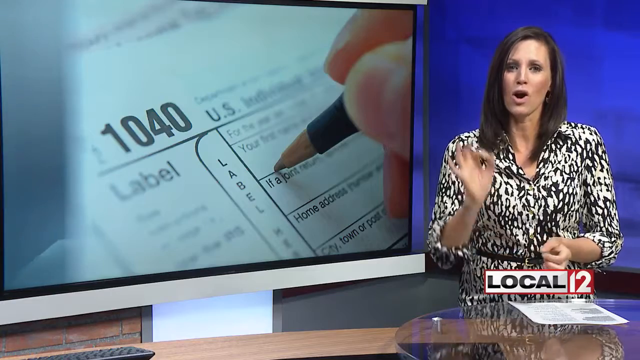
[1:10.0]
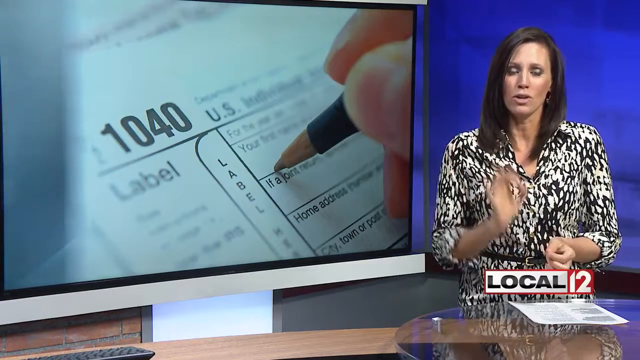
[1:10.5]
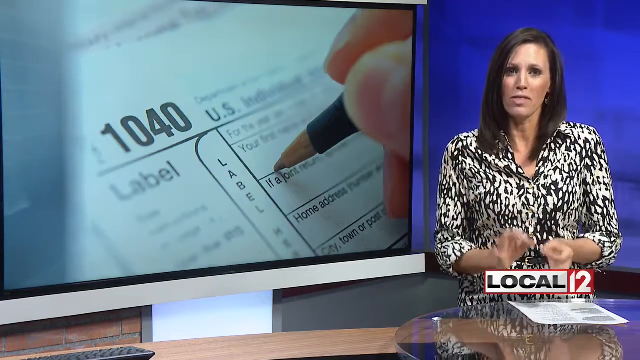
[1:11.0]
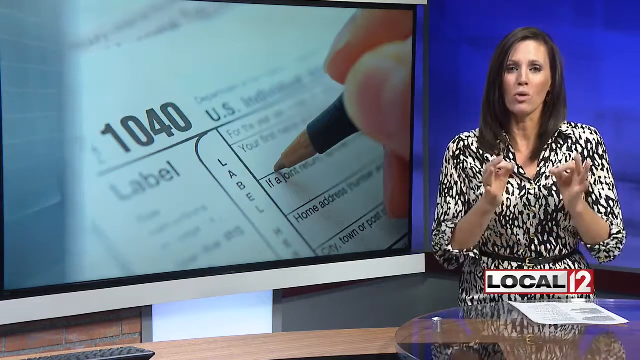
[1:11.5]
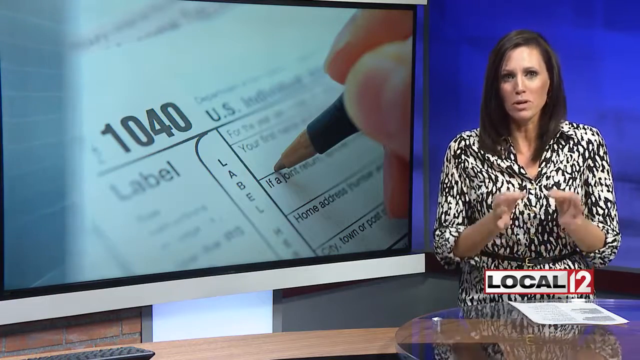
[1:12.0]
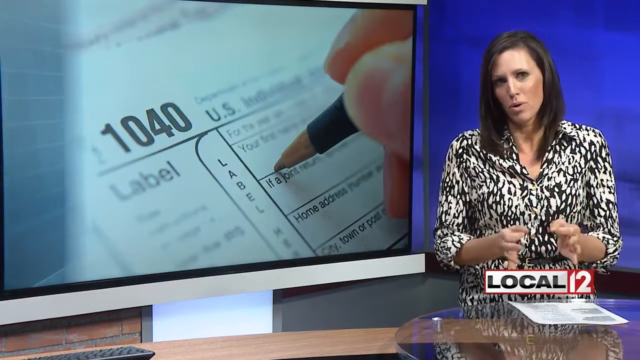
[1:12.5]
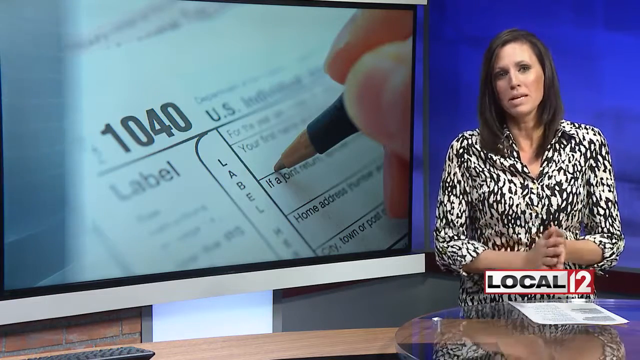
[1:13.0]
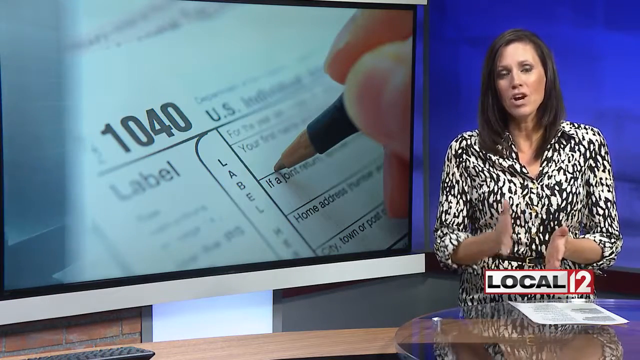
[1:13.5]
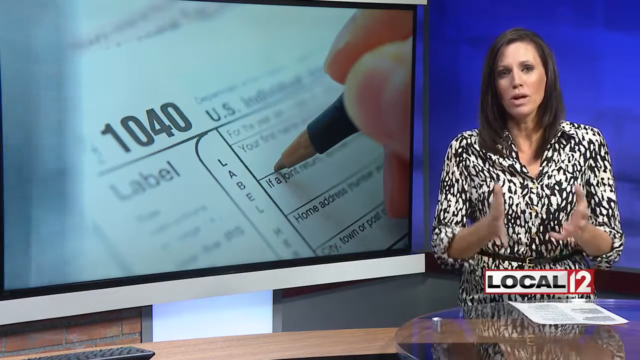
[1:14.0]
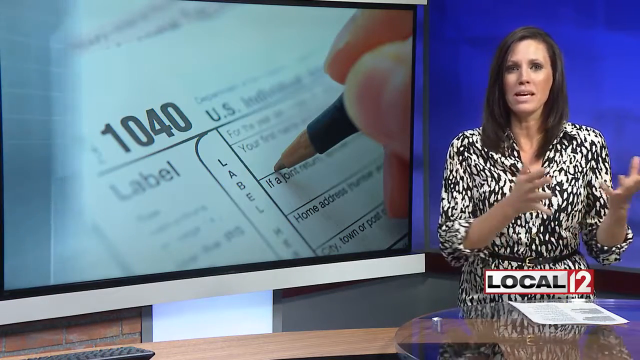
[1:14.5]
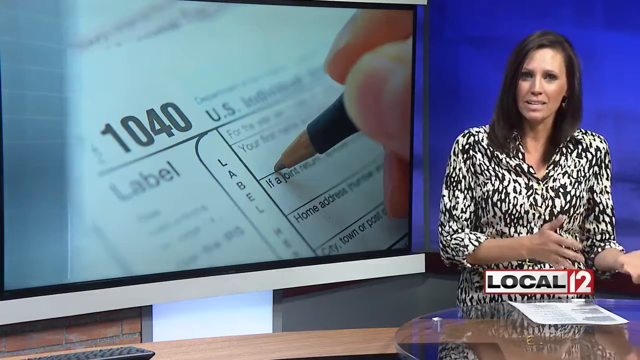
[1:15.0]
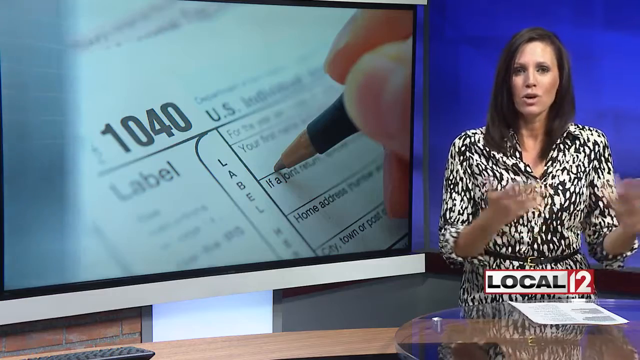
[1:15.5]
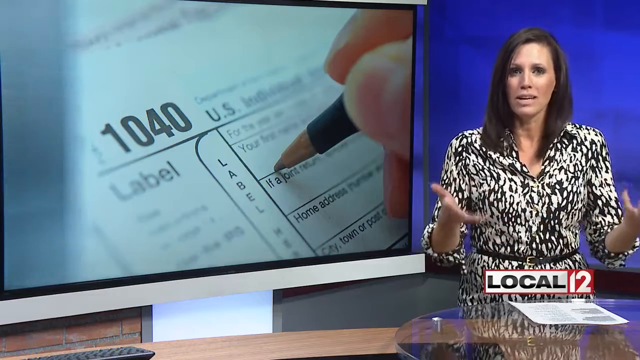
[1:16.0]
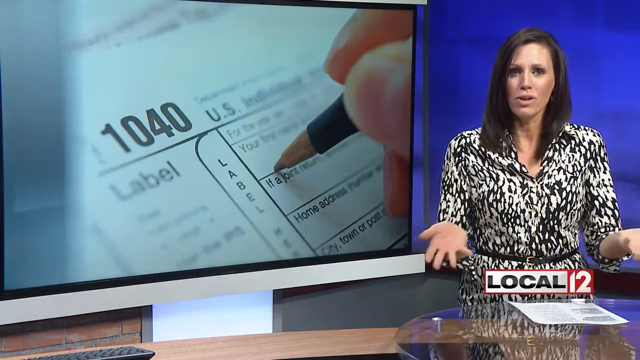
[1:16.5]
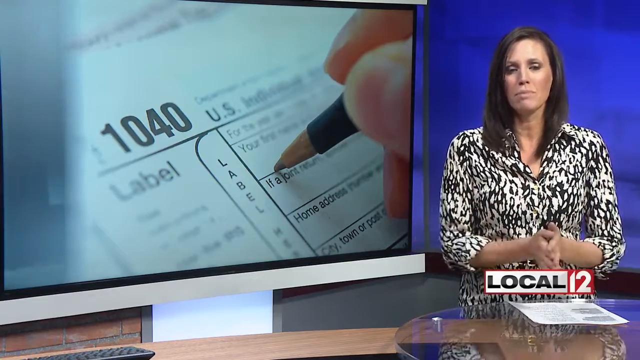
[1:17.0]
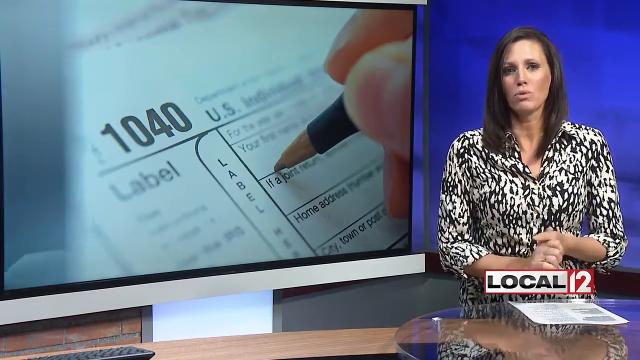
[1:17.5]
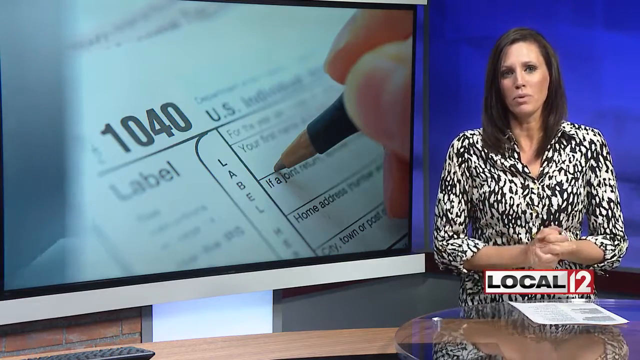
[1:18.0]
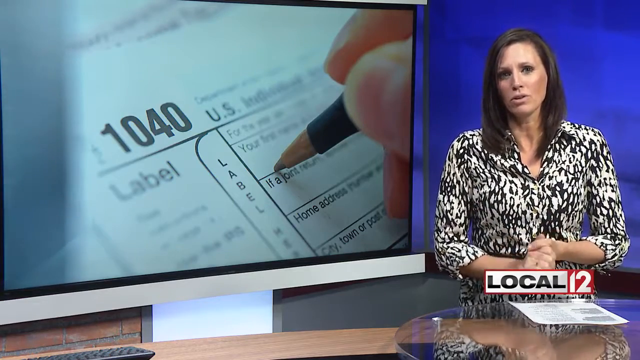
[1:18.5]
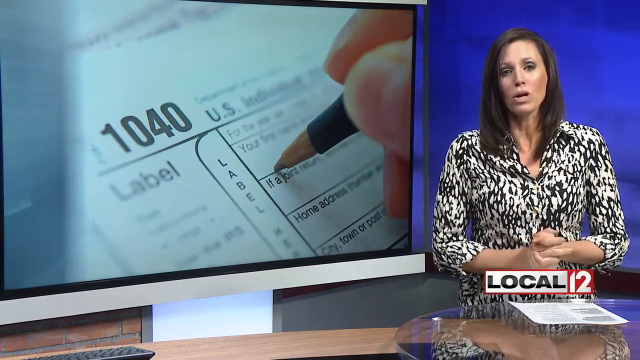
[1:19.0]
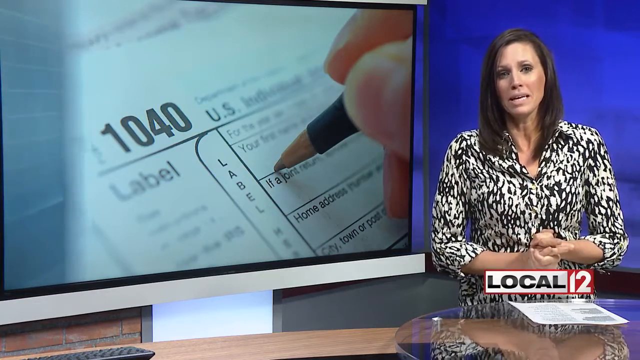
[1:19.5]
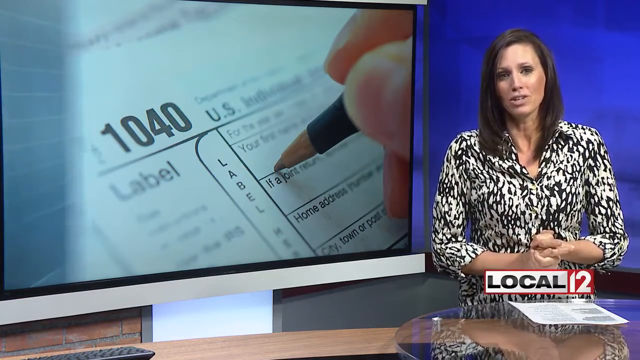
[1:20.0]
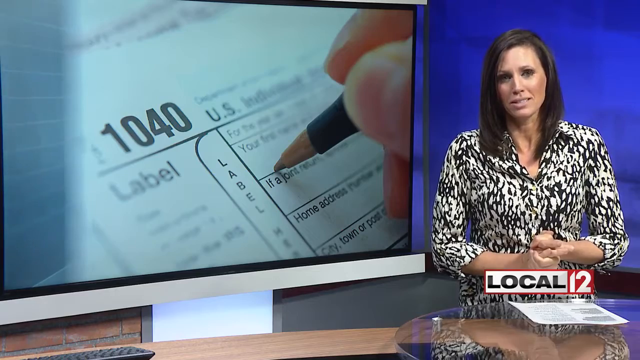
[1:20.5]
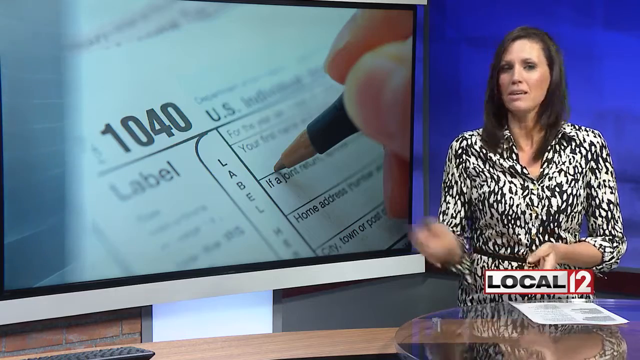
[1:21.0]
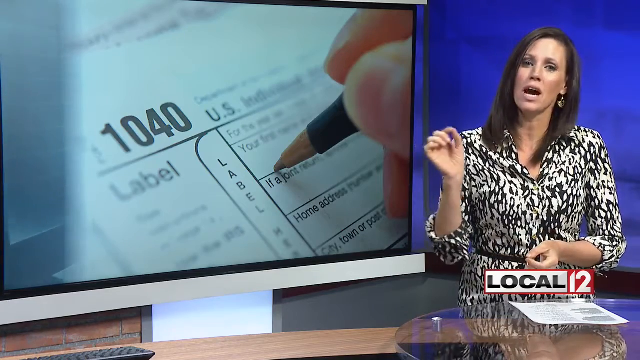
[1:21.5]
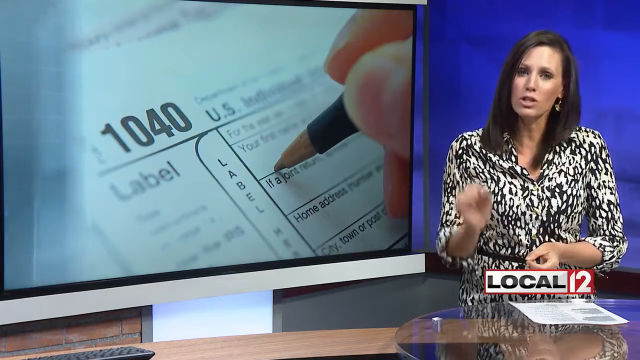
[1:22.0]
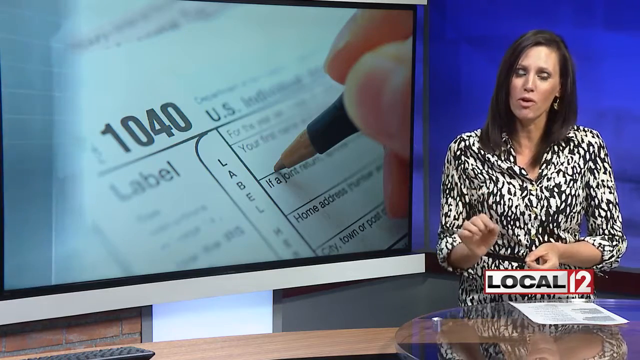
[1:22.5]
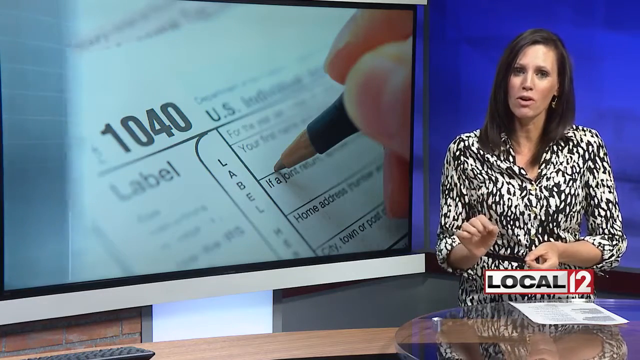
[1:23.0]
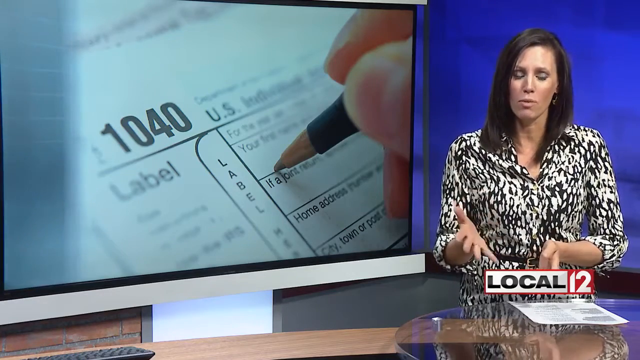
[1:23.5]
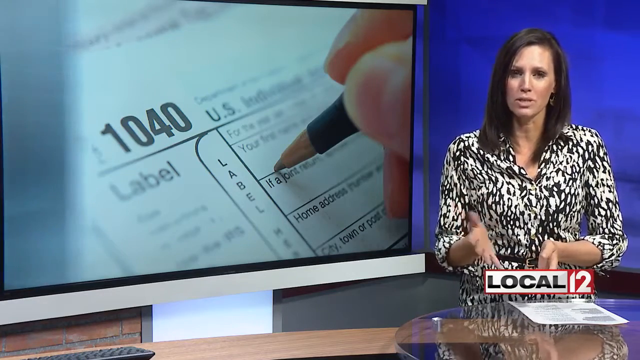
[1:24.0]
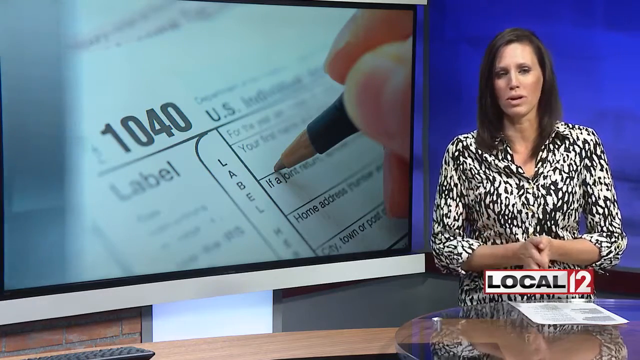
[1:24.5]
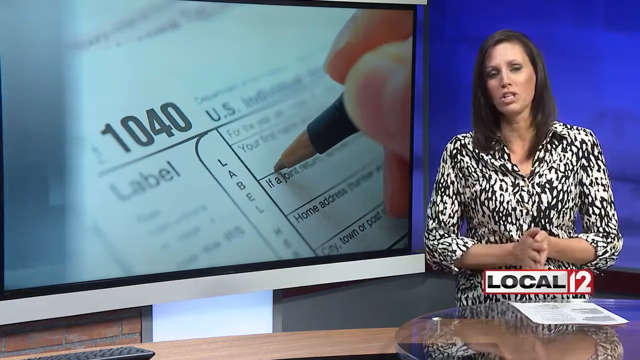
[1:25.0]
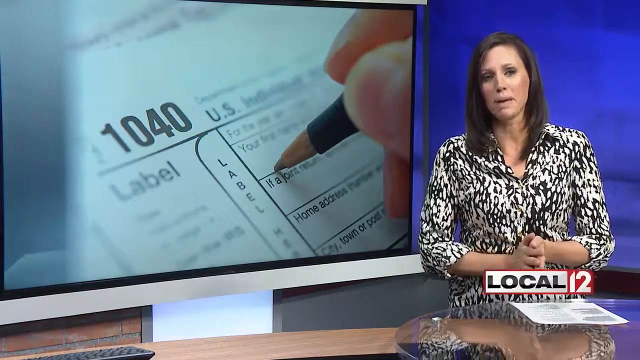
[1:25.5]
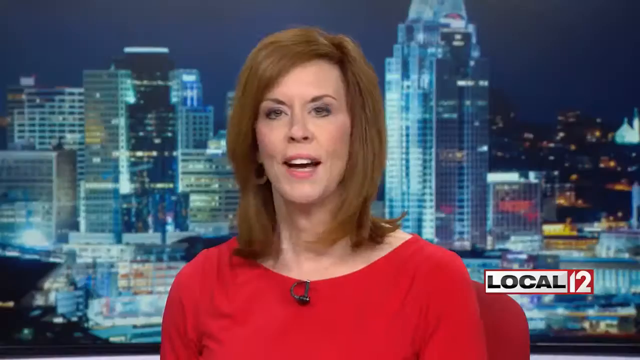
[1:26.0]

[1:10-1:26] The news report about taxes and tax forms continues on the channel Local 12, with "Local 12" in the lower right-hand corner in black, white and red font. On the right is a female reporter, Caucasian, with black hair, wearing a black and white dress with a black belt around her waist. On the left, a TV monitor shows the 1040 tax form where the name goes. The reporter moves her hands to the left and to the right, emphasizing points with both hands, at times wrapping her hands together and at other times moving them more towards her left or more towards her right as she wraps up the story. Near the end she uses her right hand to emphasize a point, holding her thumb and index finger together. She wears an earring in her left ear, and behind her is a blue screen with black borders.